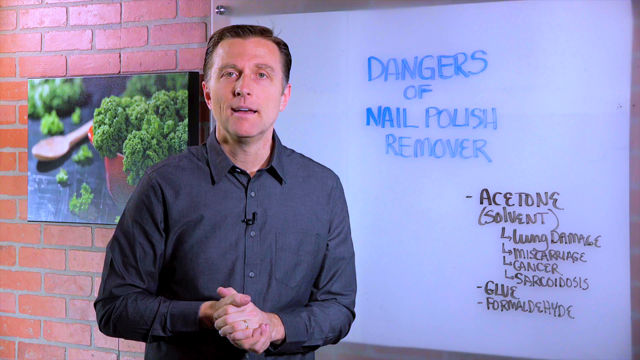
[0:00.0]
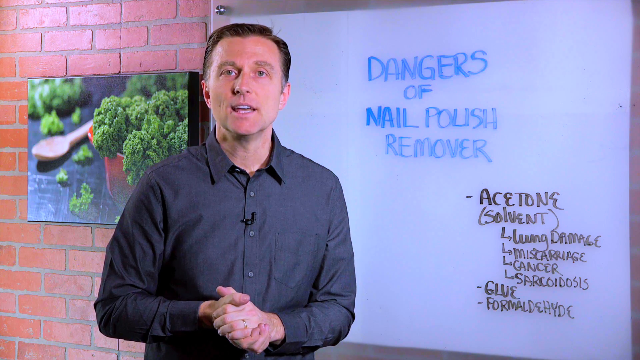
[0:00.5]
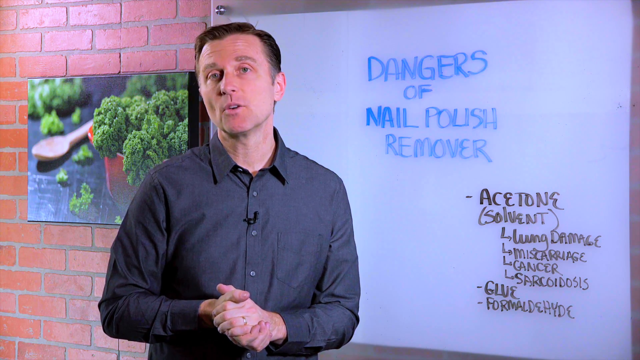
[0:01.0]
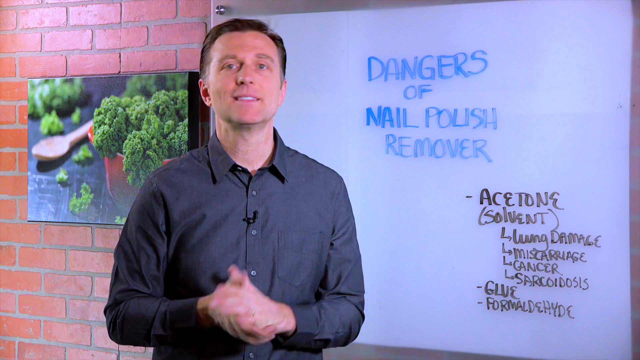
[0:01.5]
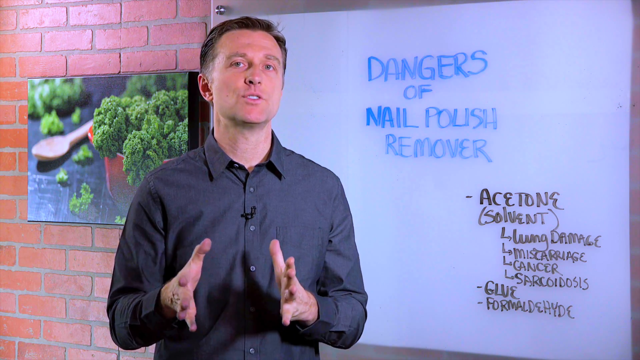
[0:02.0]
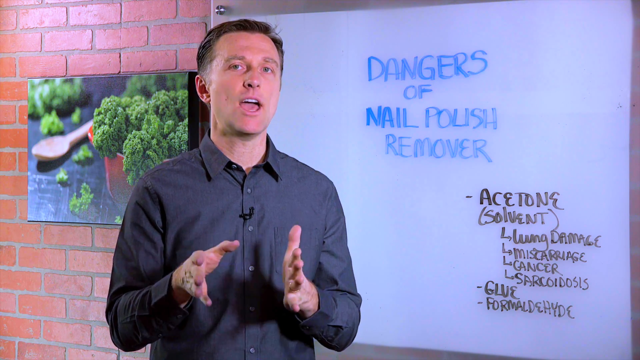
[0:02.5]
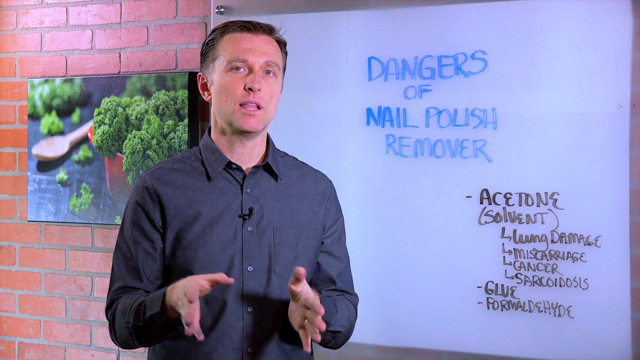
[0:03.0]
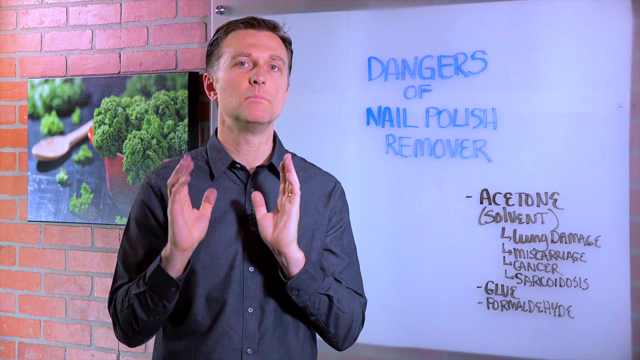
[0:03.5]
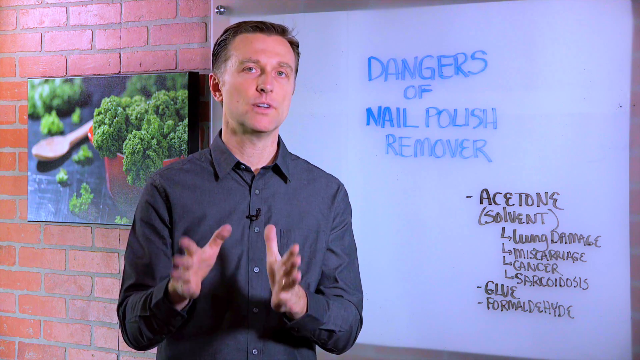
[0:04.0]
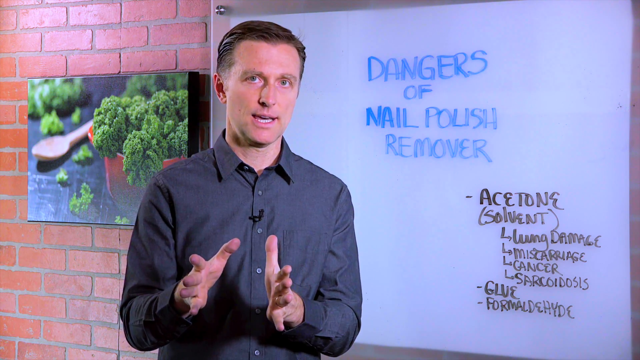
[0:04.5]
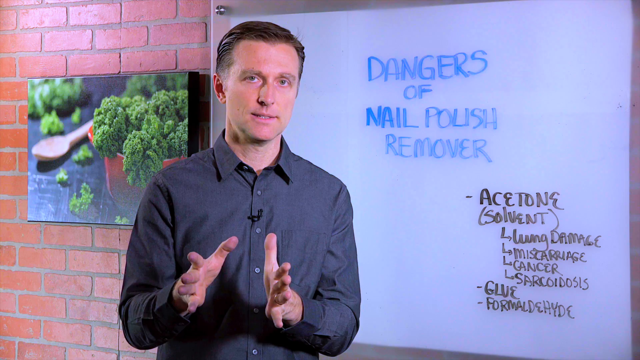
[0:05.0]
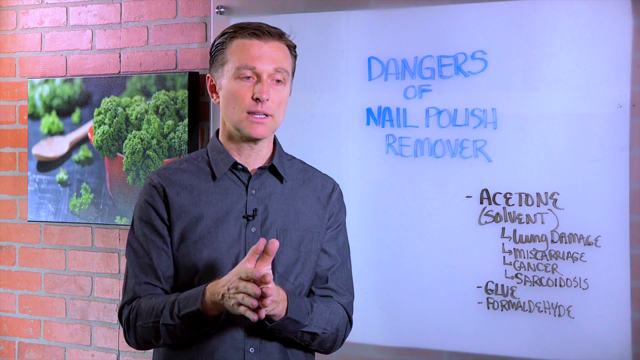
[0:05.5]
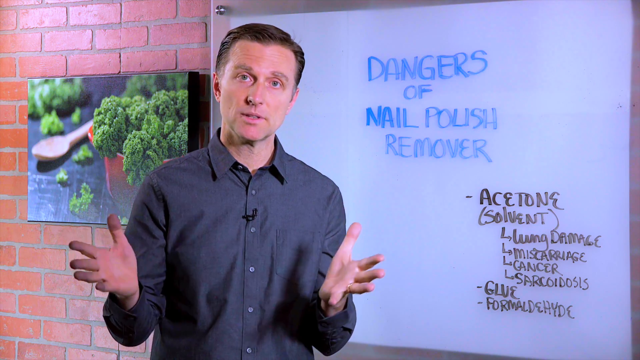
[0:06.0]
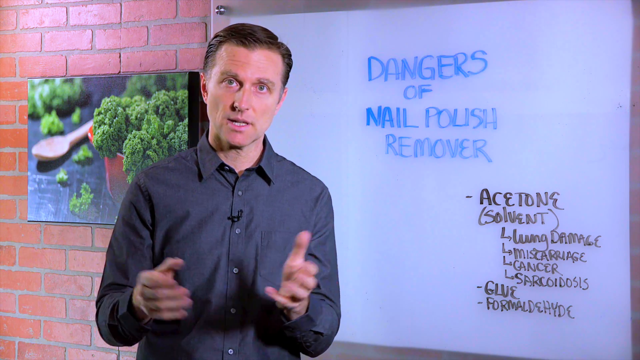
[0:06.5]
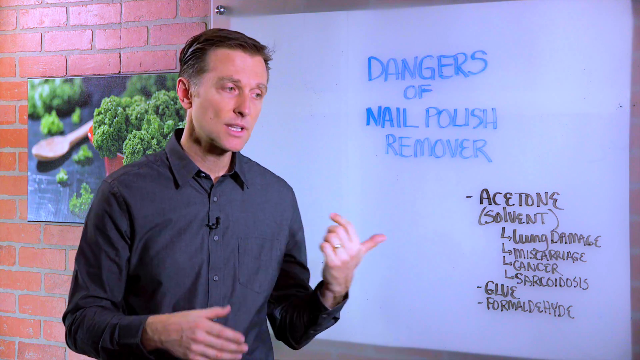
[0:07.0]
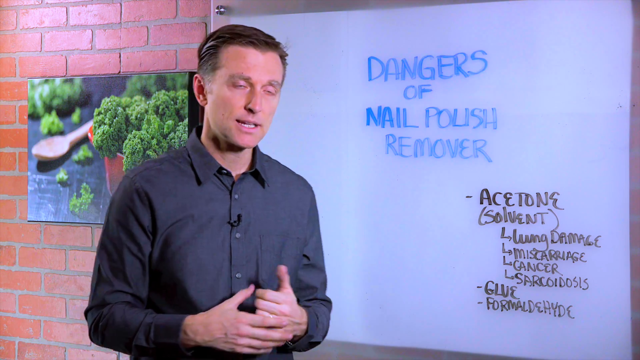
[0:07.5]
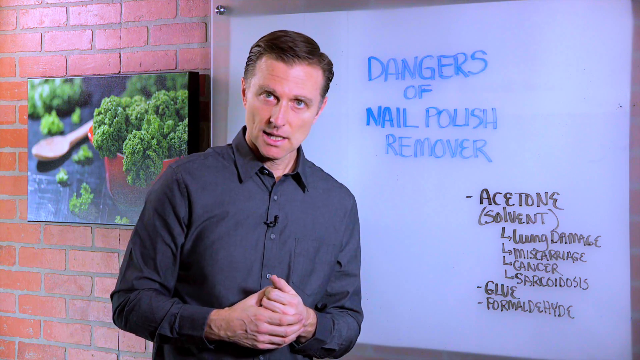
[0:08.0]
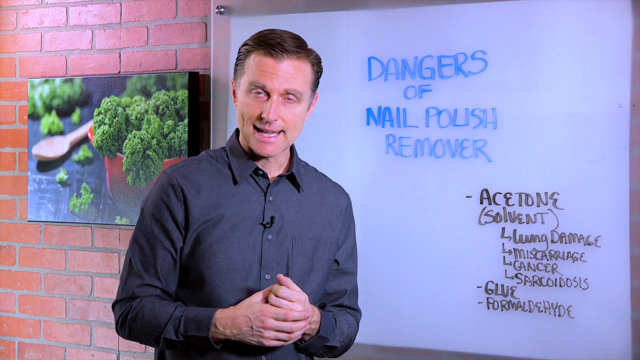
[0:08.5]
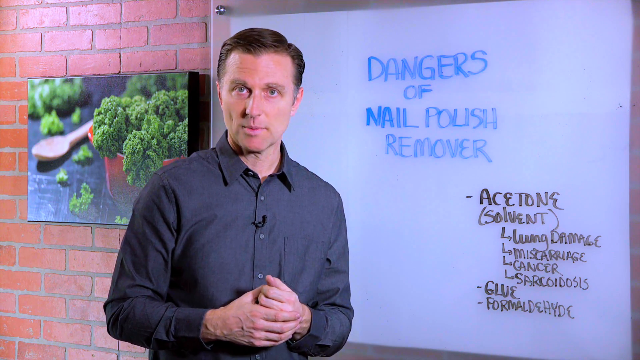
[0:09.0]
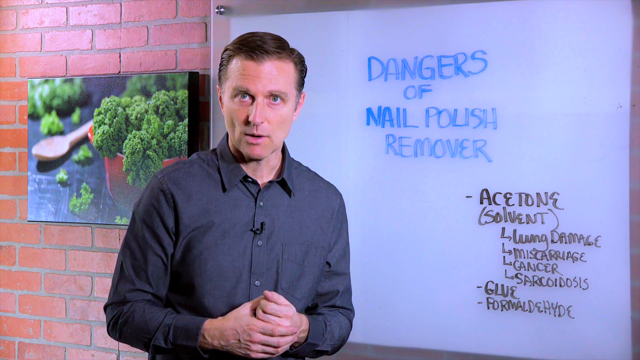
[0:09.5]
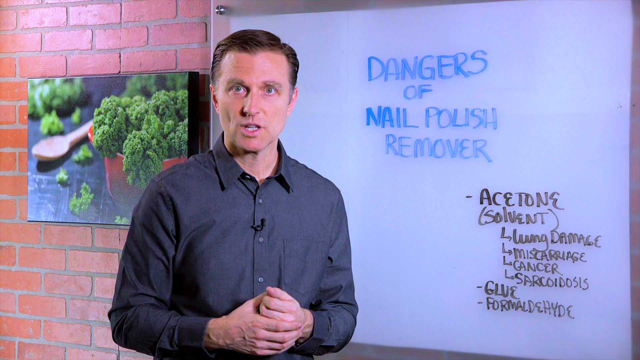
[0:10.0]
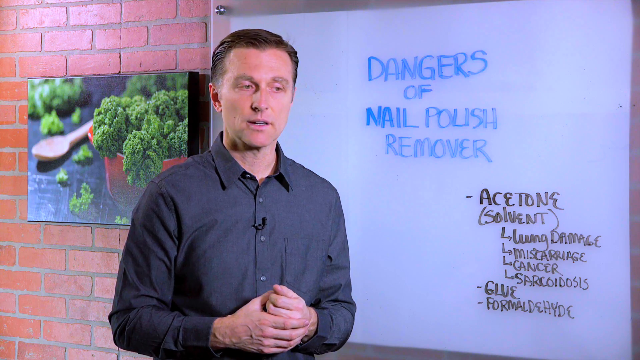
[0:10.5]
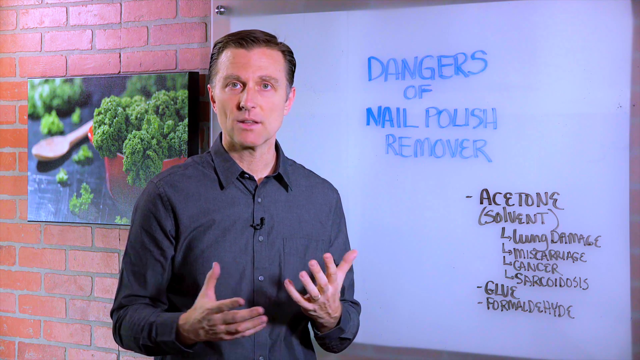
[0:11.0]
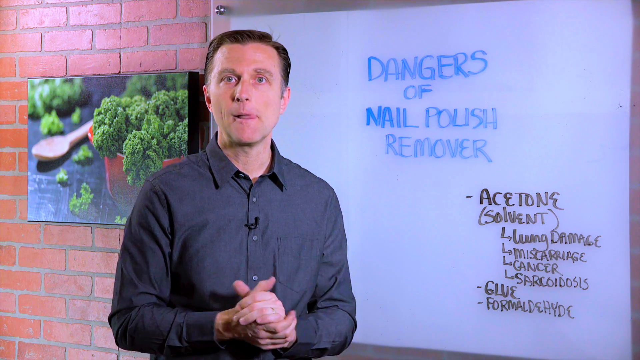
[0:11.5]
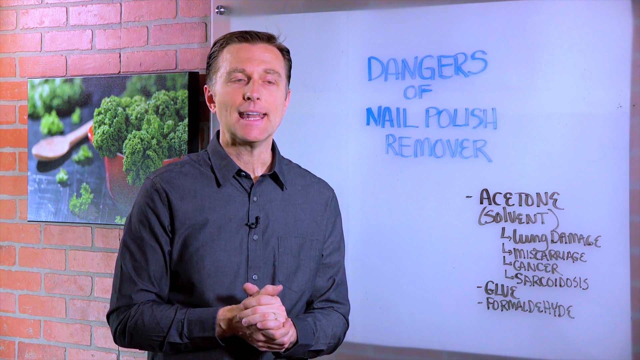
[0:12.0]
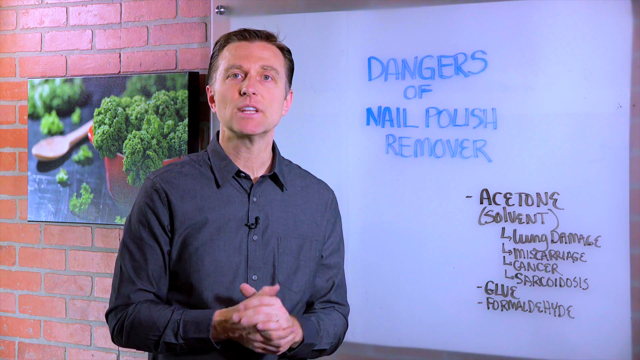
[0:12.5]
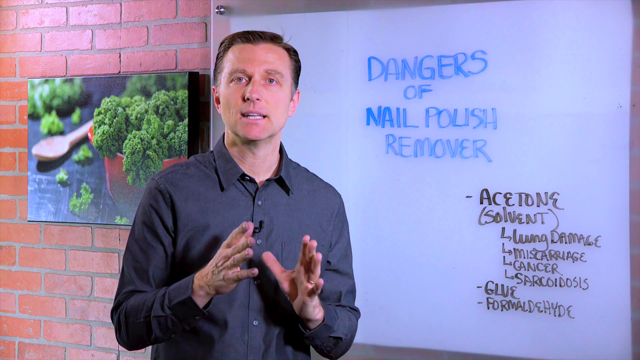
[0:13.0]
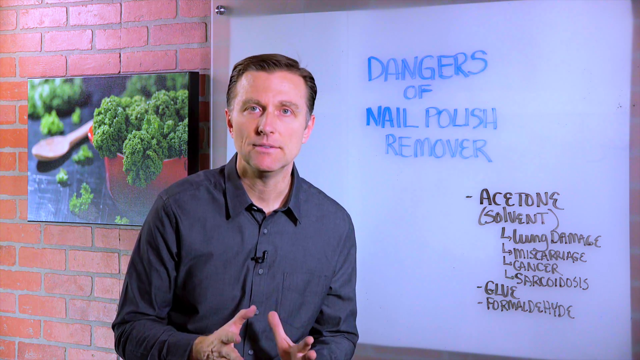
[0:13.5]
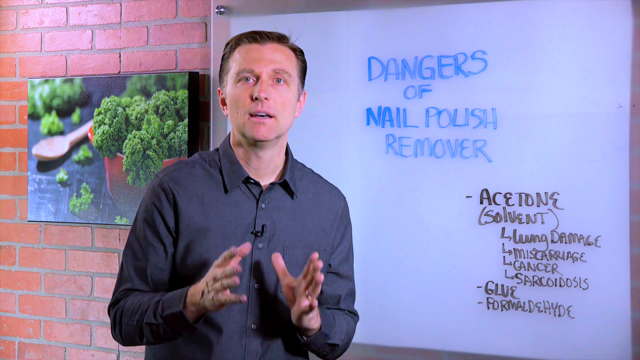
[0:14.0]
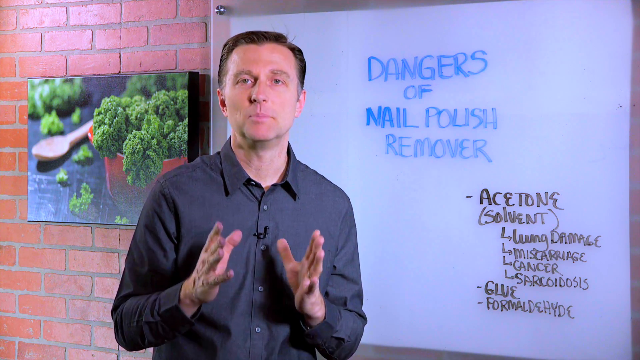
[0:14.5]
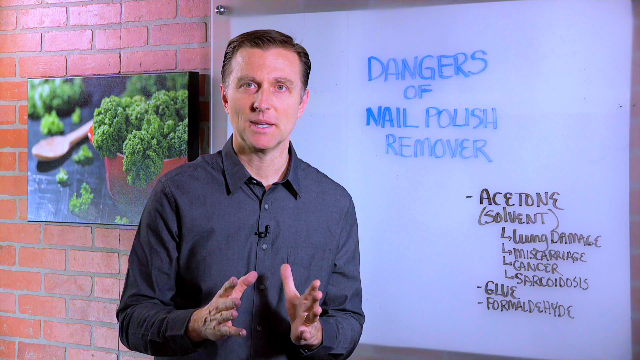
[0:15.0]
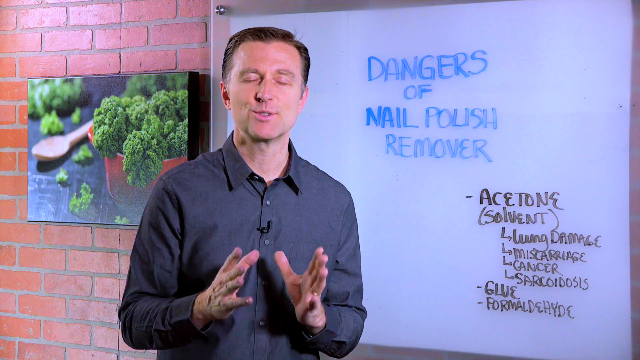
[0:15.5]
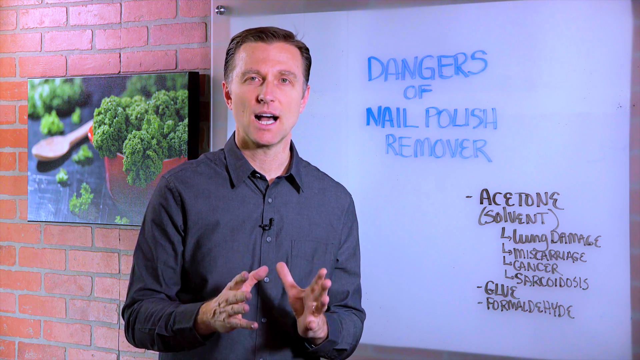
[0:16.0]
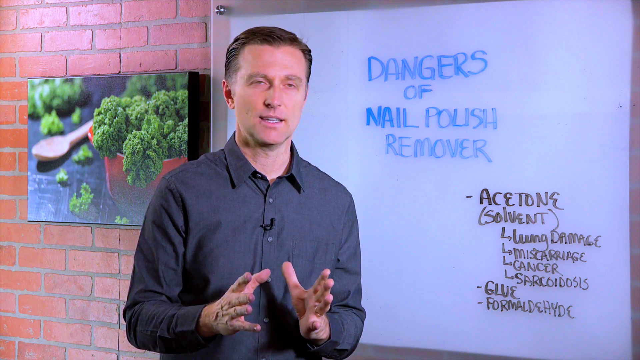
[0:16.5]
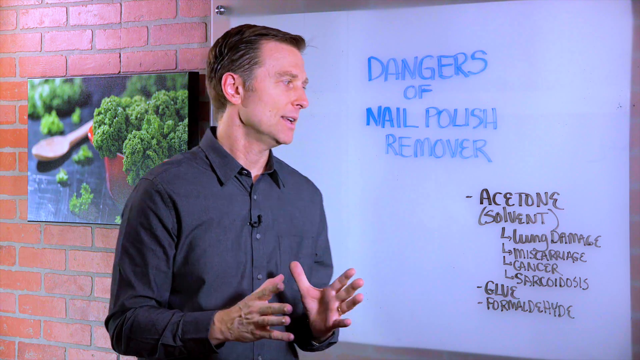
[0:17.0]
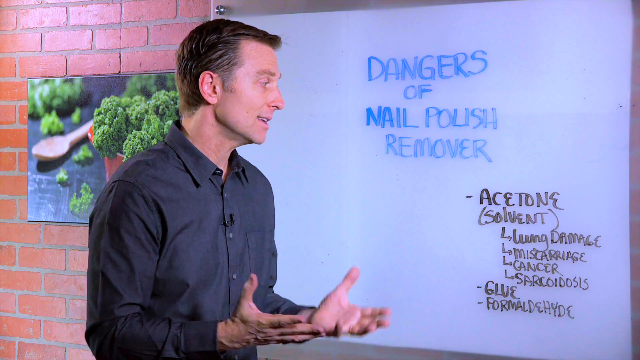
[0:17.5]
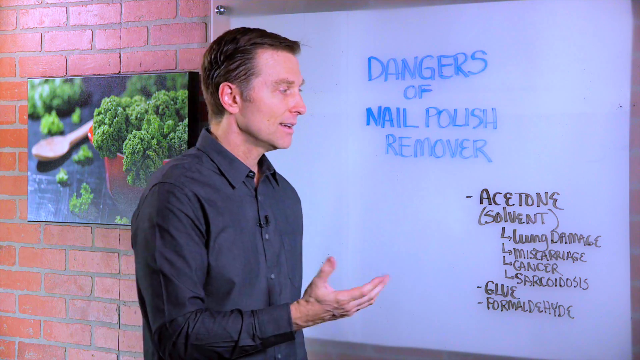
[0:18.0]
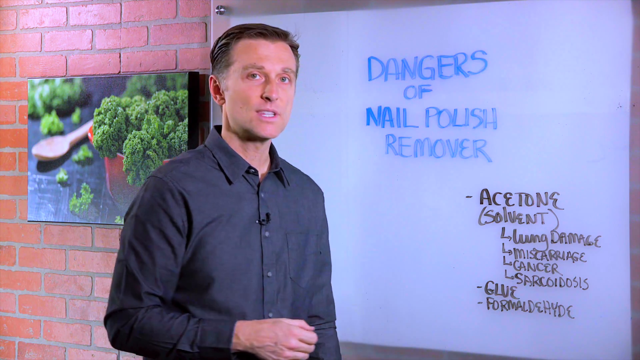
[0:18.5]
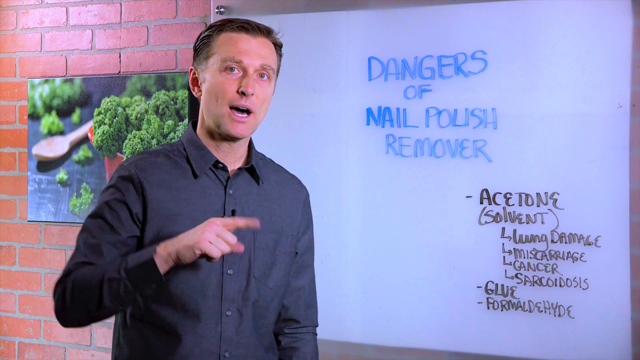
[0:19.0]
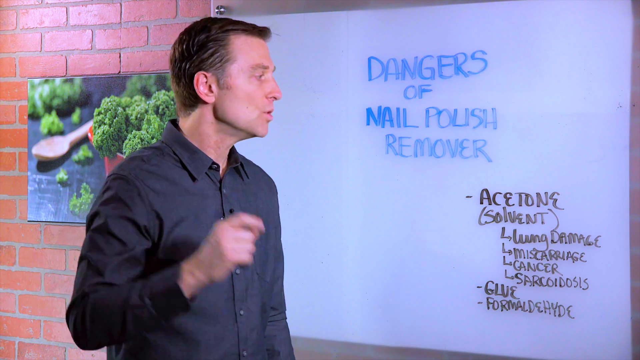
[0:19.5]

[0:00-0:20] A gentleman talks in what appears to be a studio with a brick wall and a modern glass, acrylic-like board for writing on with a dry erase marker, almost like an older chalkboard. The board says "dangers of nail polish remover" in blue text, with three points underneath: "acetone" with a few different solvents, then a bullet point for "glue" and one for "formaldehyde." The man looks to be probably in his 50s, with some gray hair on the side; his hair looks dyed brown. He talks, gestures, and mostly looks at the camera. He wears a darker navy blue button-down shirt with a pocket on the left. In the background, a picture hangs on the brick wall showing broccoli in a red bowl with a wooden spoon next to it.